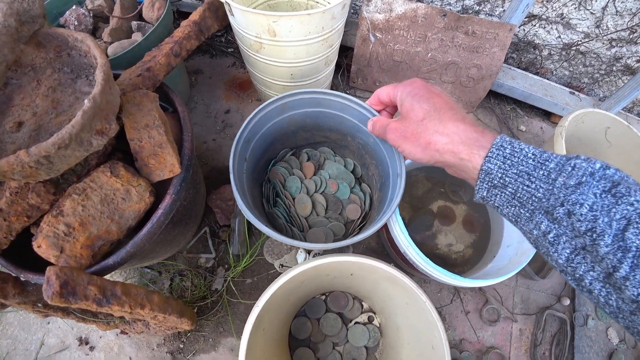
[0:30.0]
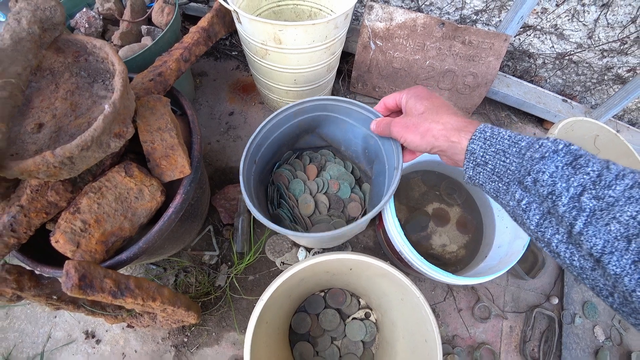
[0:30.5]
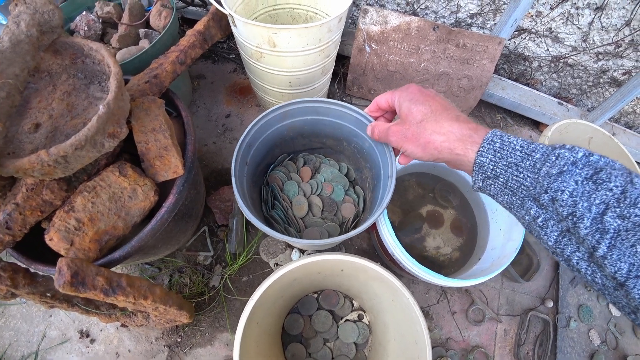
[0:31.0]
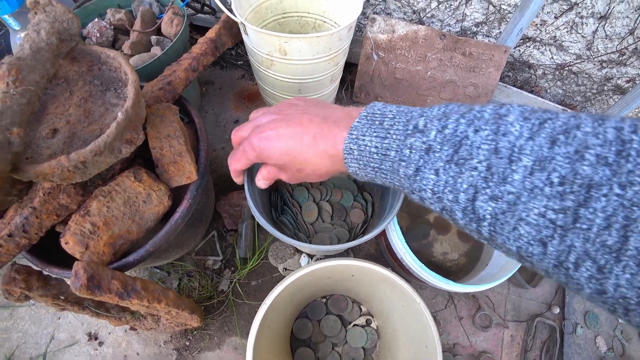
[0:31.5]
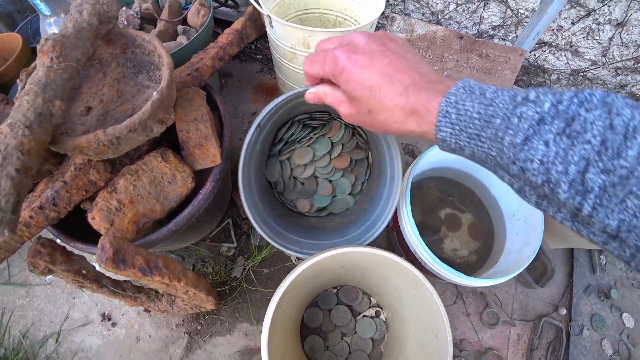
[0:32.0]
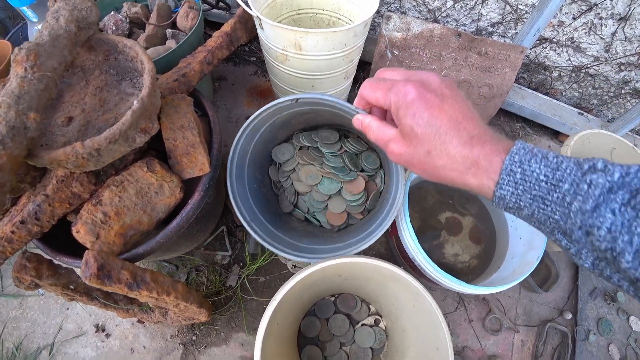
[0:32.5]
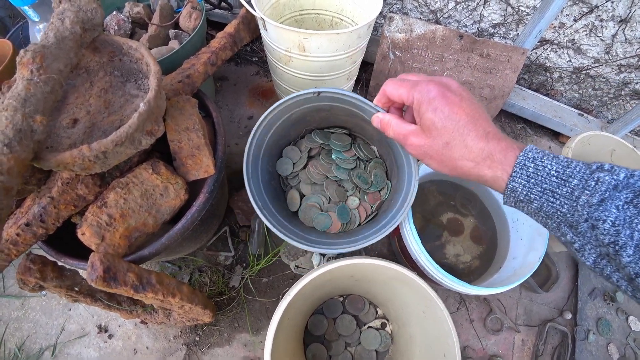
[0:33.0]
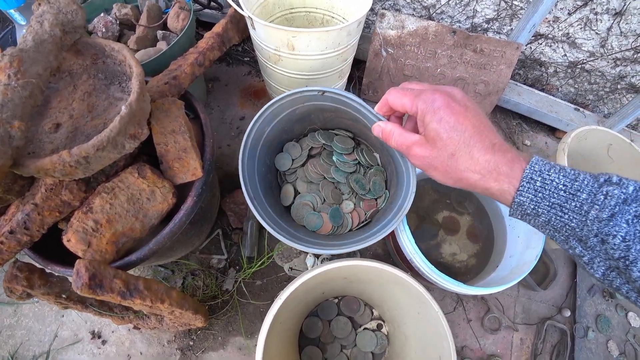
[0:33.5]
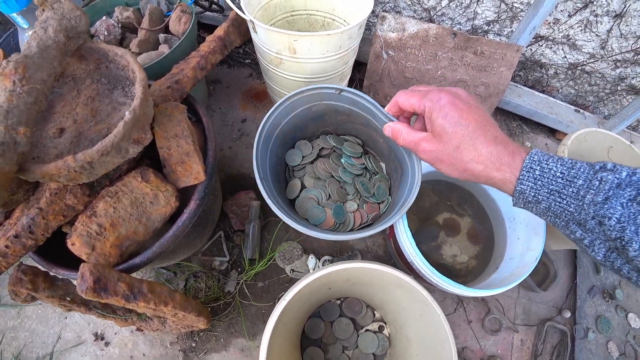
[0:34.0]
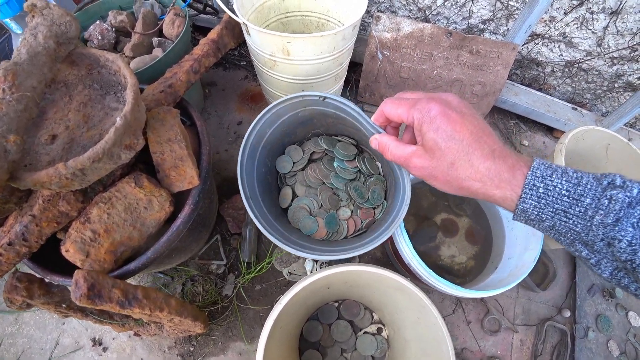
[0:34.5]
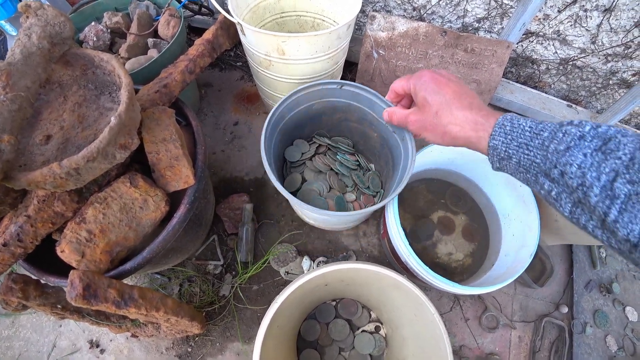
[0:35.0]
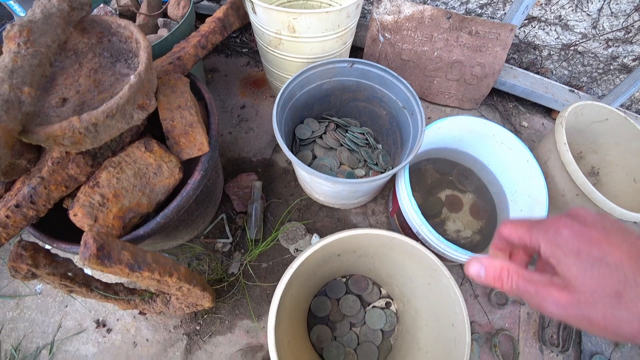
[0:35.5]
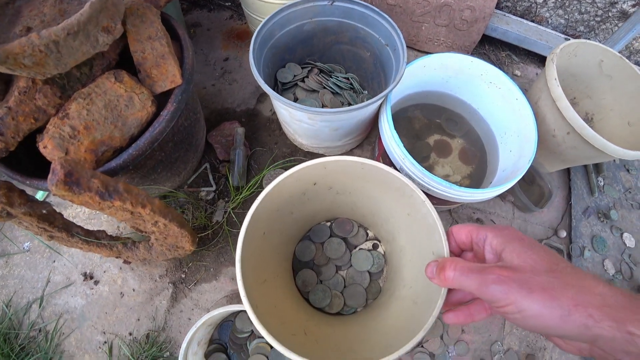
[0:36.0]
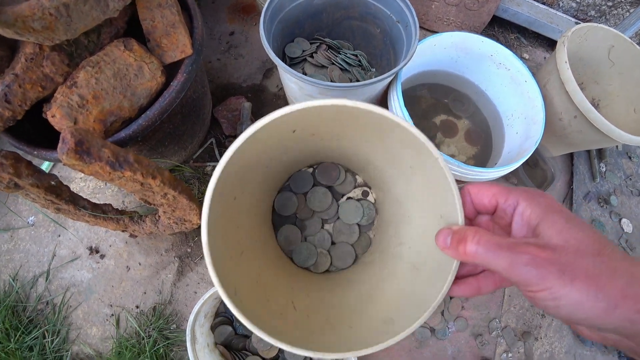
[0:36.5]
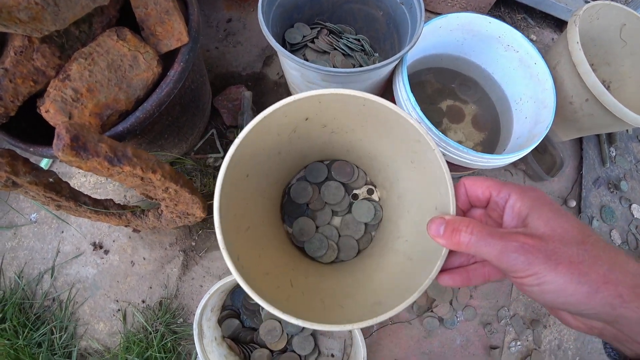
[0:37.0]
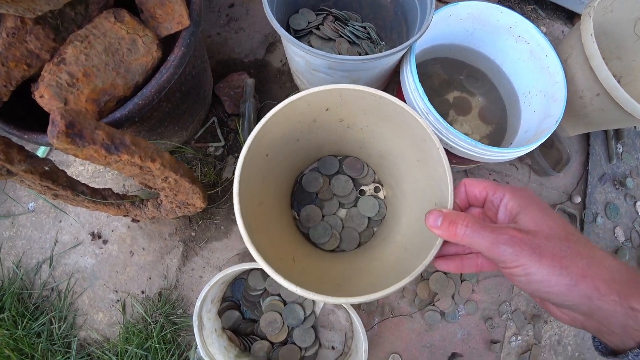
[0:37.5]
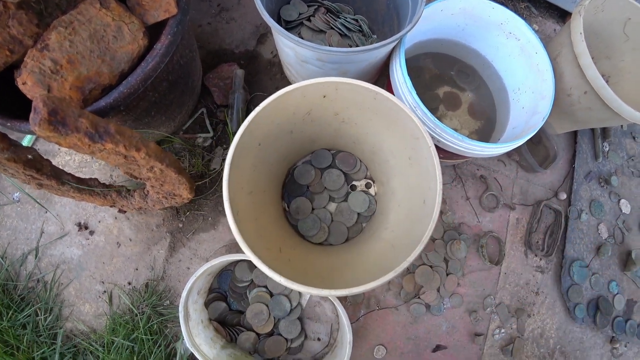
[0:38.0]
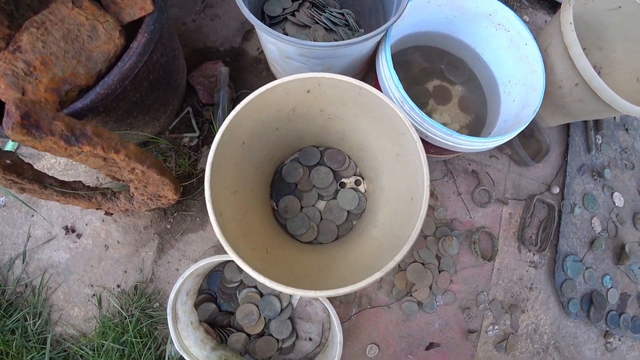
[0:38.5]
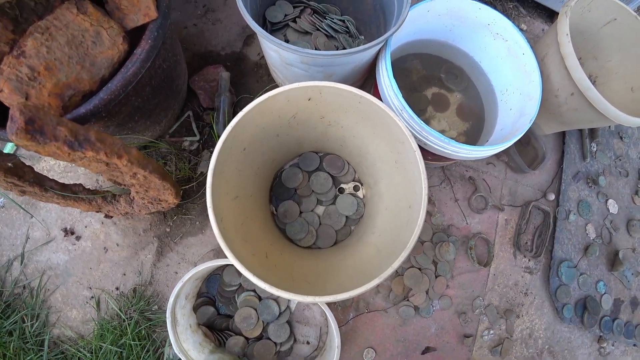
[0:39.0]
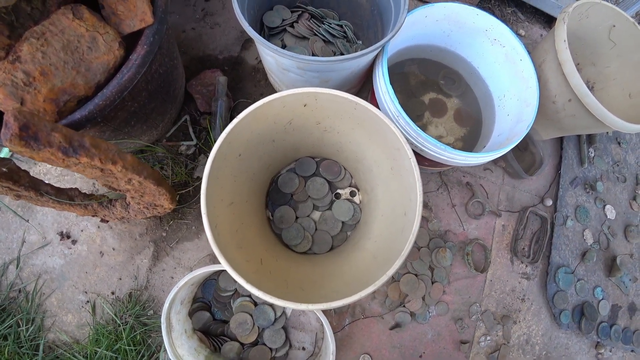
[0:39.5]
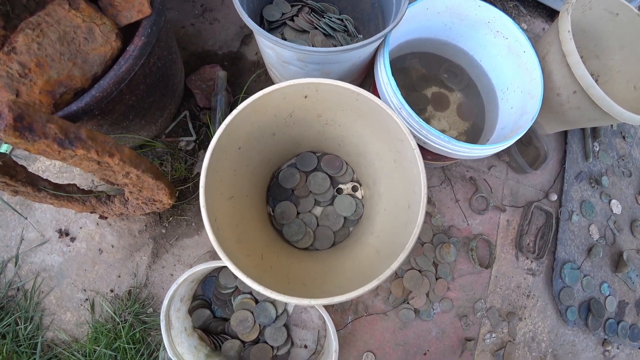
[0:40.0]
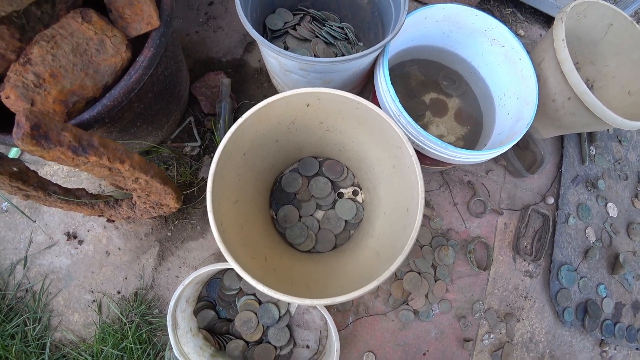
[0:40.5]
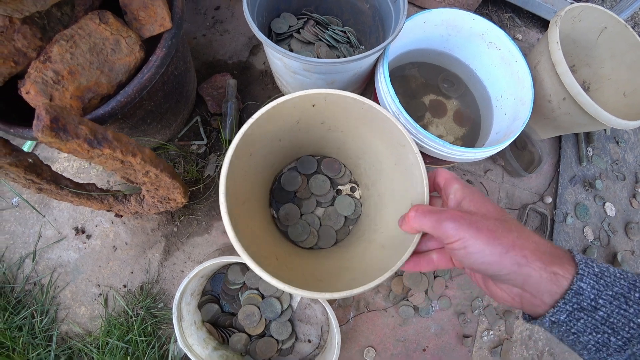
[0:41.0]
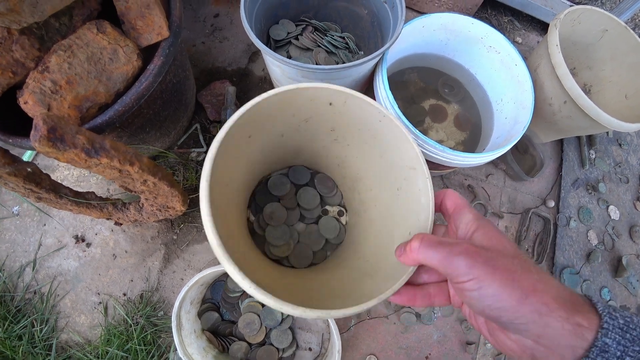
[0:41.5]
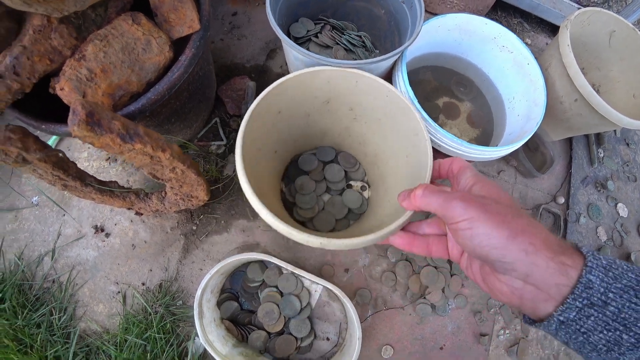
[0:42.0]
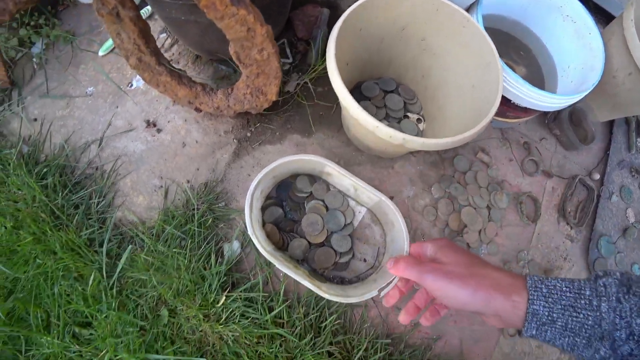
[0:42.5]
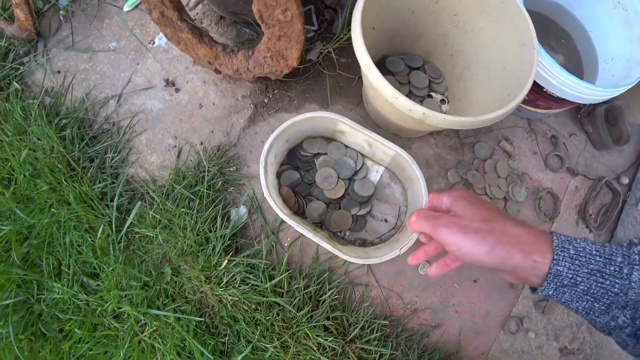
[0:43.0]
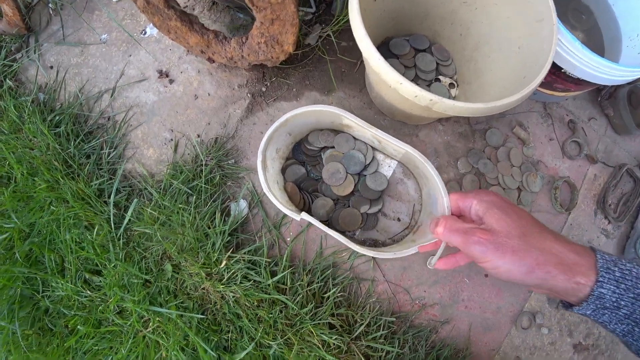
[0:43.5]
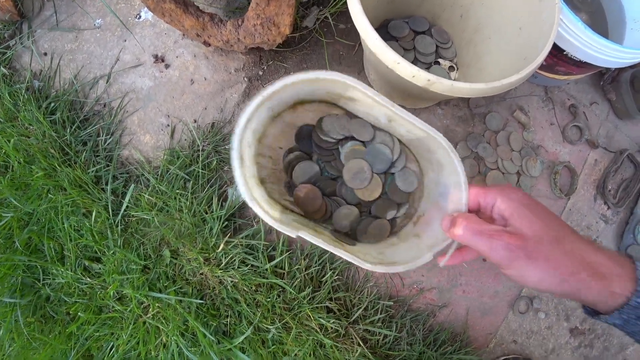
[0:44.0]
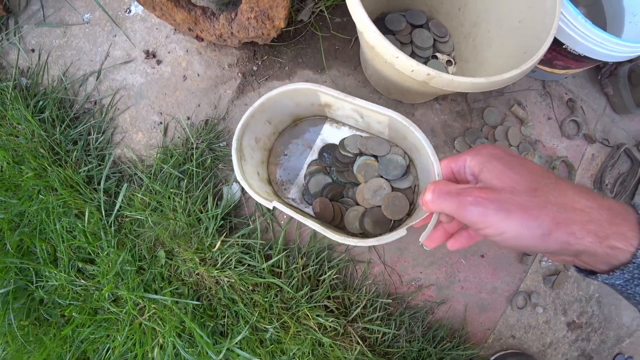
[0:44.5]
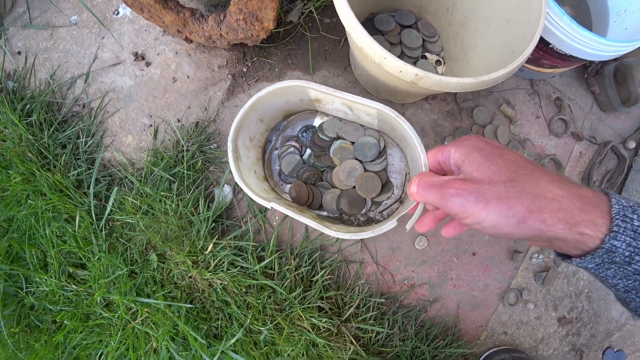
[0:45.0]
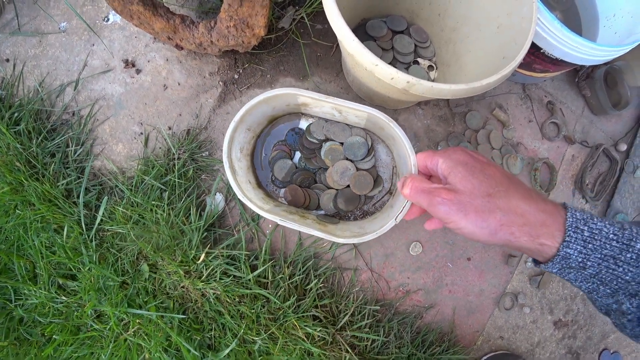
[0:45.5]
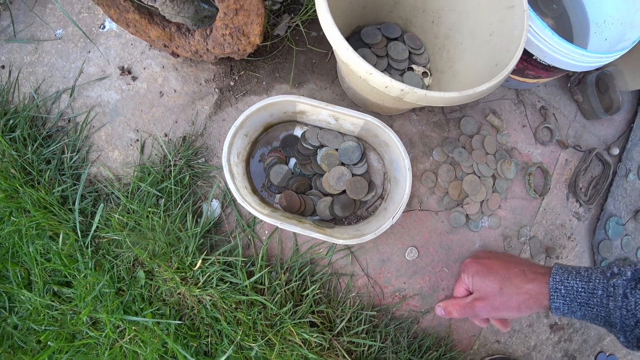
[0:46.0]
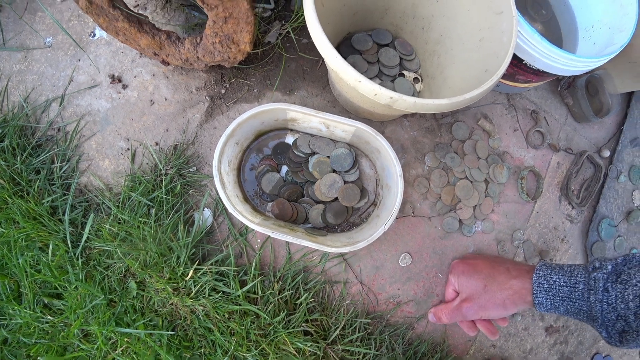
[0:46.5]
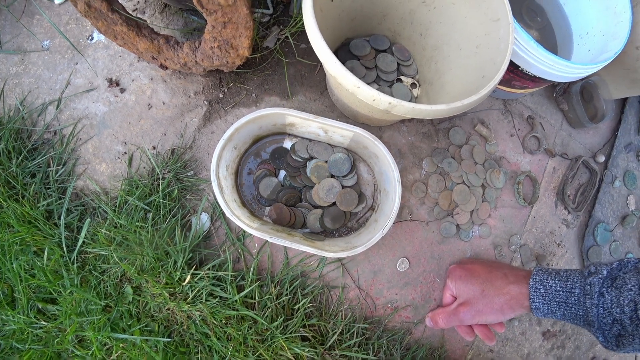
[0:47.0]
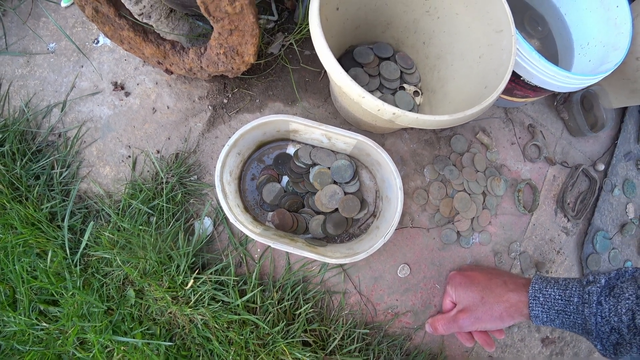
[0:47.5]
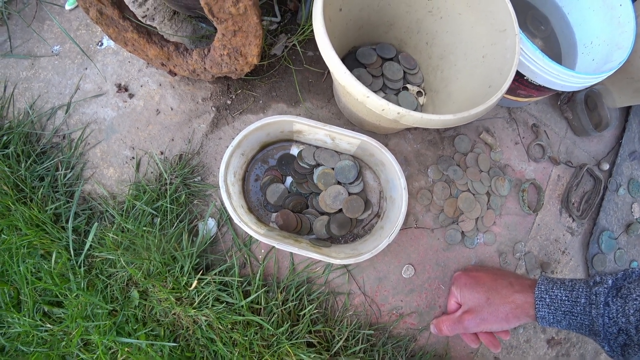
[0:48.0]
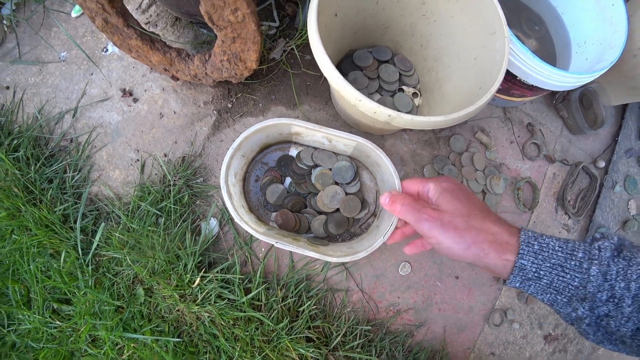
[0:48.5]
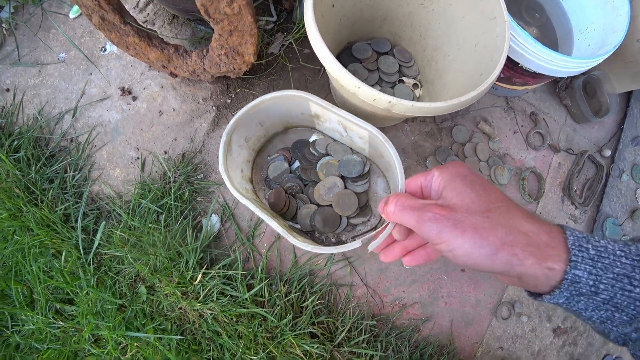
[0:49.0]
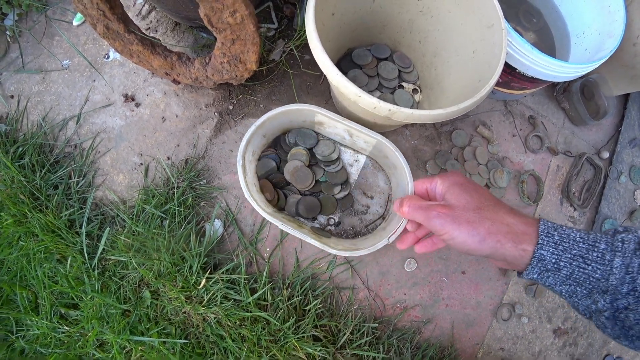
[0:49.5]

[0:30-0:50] The hand comes in and plays with the central plastic pot of coins, some kind of old flower pot, then moves to a slightly yellowish pot in the foreground that has a few coins in it, with the holes in the bottom of the pot visible. It then moves to a little oval pot that looks like an ice cream or margarine tub, holding a few coins in water. On the ground in the background are many more coins on the stones, with some grass visible on the left. The man wears a sort of grey jumper or cardigan that comes down to his wrists. There appears to be some kind of fence in the background at the start of the shot, and the old rusty horseshoes are still on the left. He is possibly an amateur archaeologist or metal detectorist. Various other items, presumably things he has found, are in the background, such as an old tile and some odd-looking rocks or bits of metal. The scene looks untidy and accidental. The odd fly goes past. The shot ends with him looking at the oval pot in the foreground.